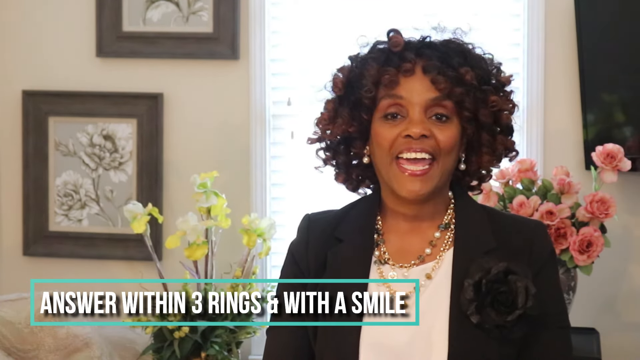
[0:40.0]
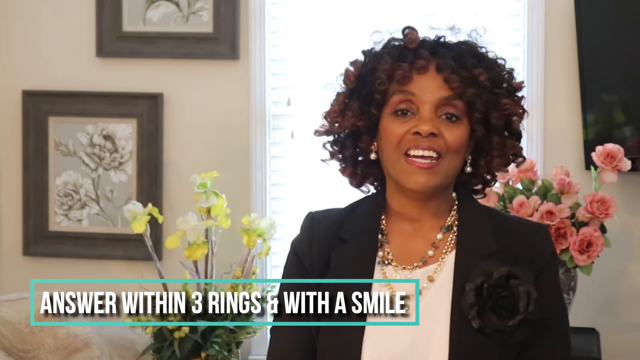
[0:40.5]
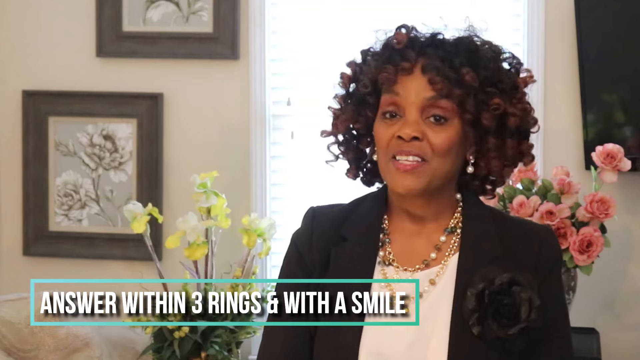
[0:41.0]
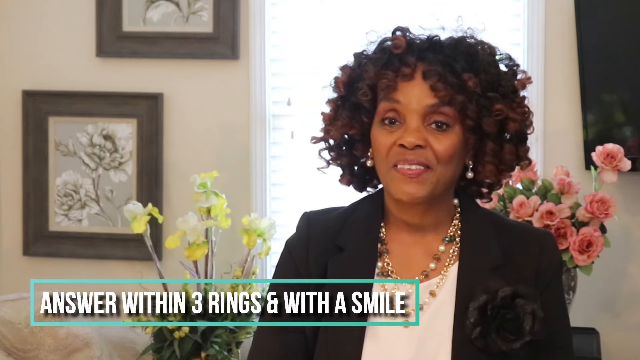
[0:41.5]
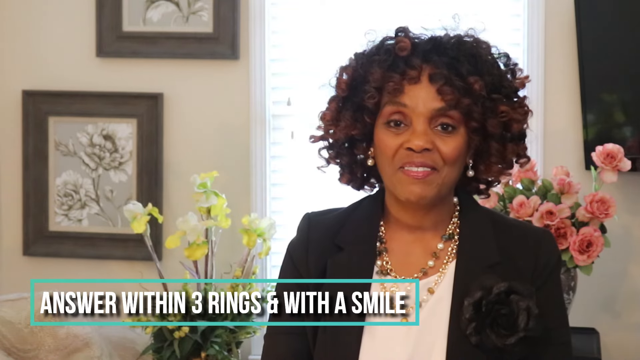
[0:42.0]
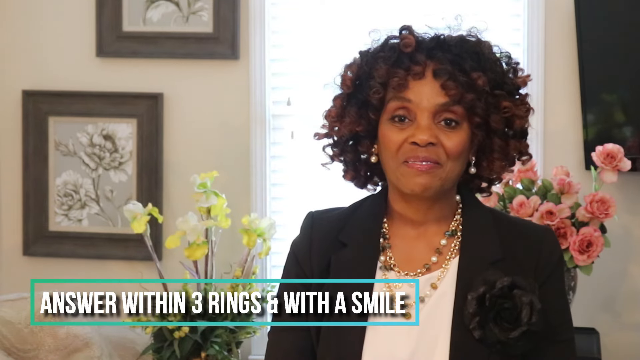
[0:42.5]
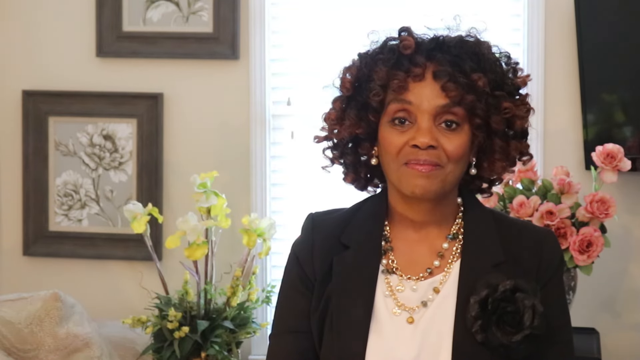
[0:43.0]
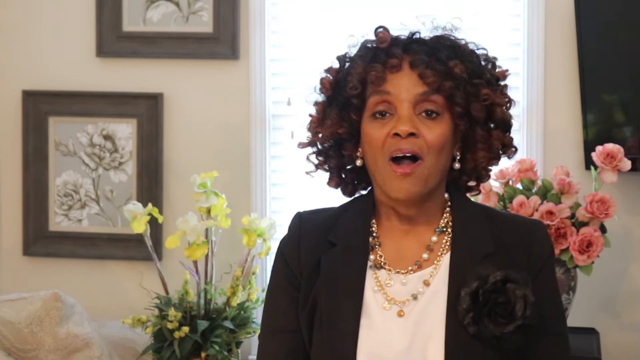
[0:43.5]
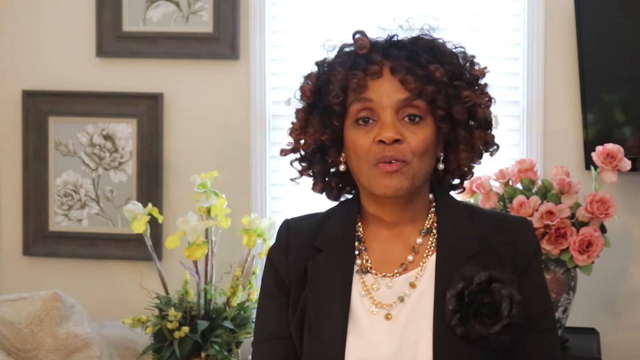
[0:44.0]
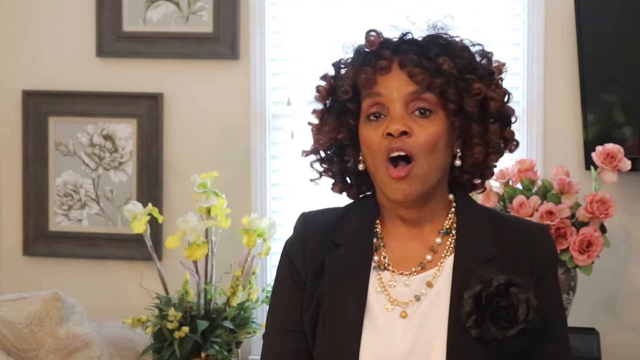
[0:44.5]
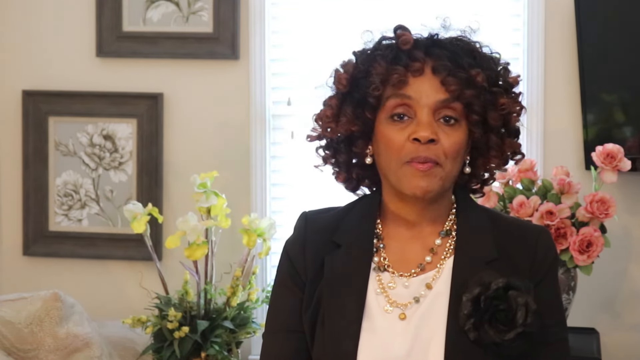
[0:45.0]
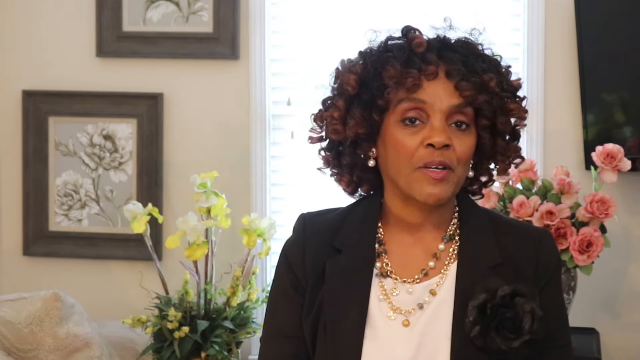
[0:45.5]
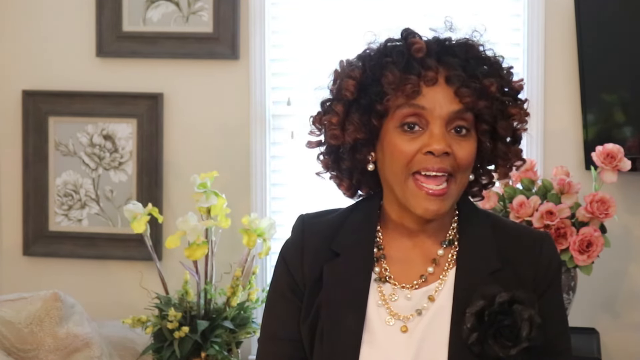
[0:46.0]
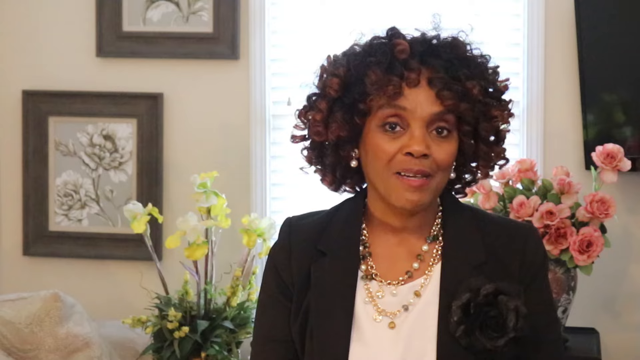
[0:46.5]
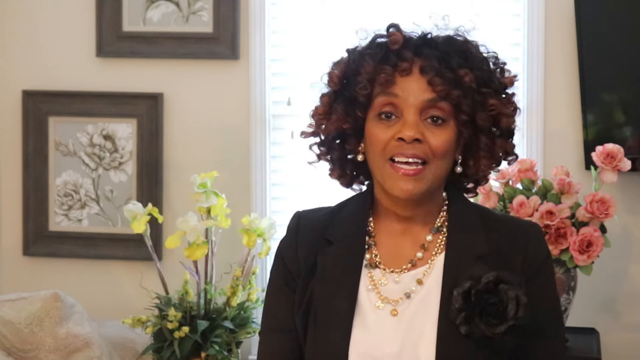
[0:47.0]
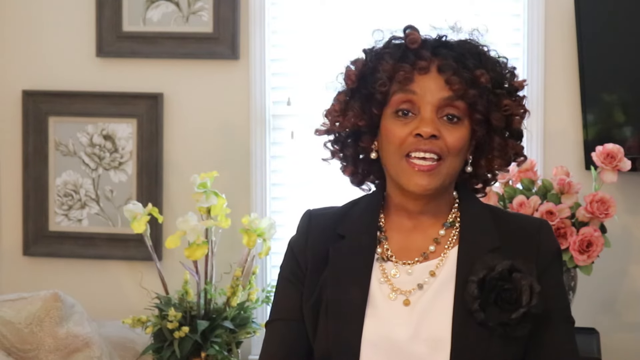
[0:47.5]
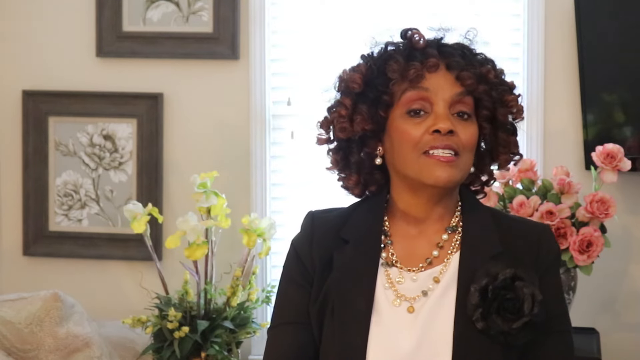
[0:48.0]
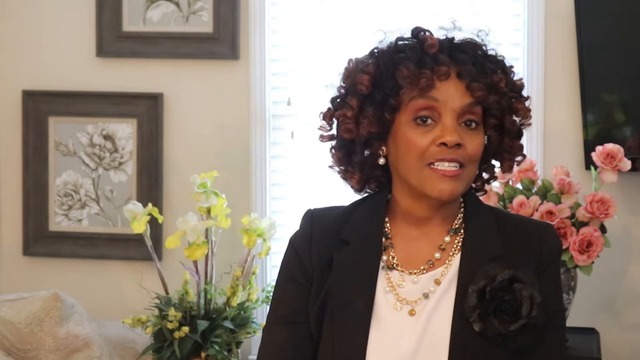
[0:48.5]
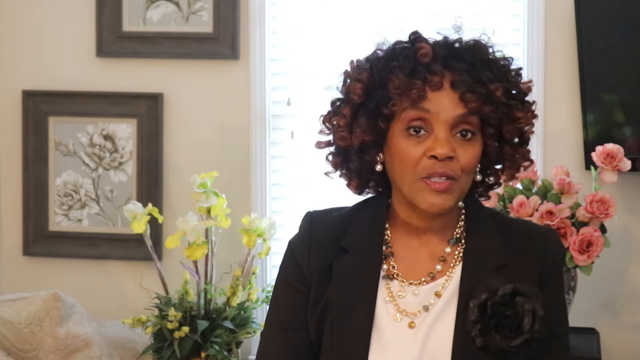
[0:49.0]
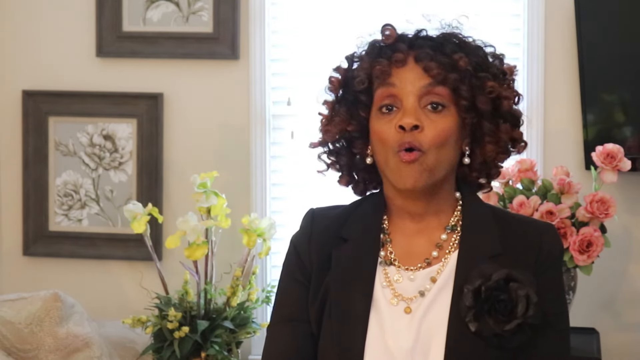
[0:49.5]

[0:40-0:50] The woman keeps talking. She looks presentable, appears to be speaking well, and smiles, giving off a positive vibe.